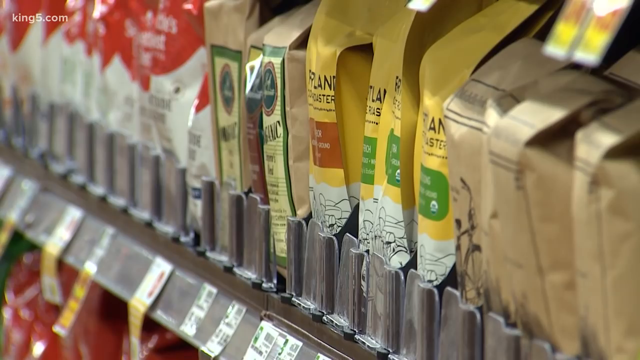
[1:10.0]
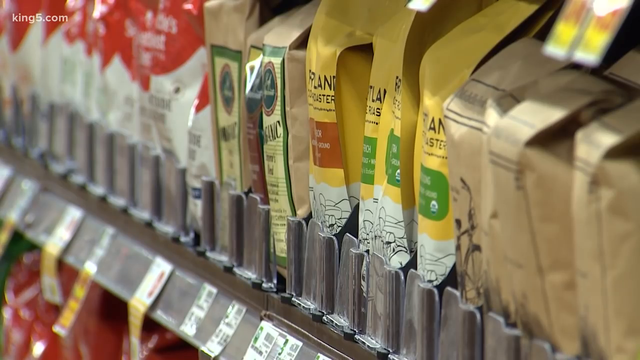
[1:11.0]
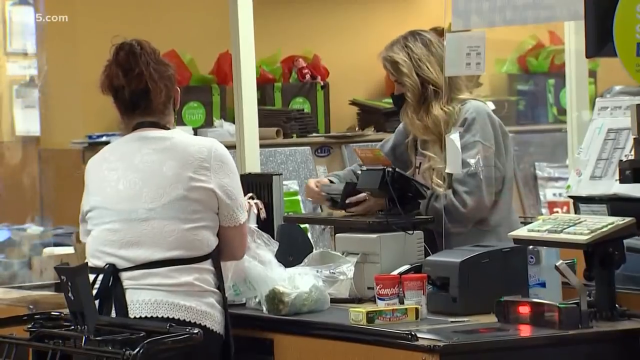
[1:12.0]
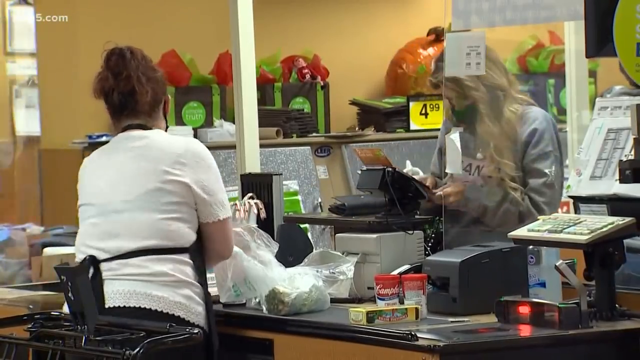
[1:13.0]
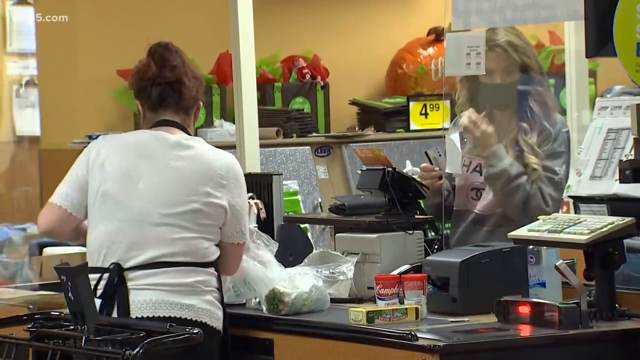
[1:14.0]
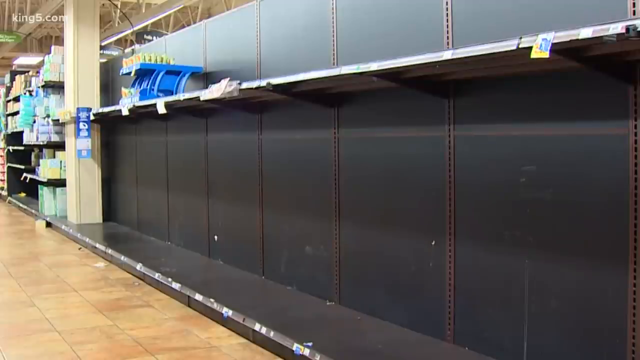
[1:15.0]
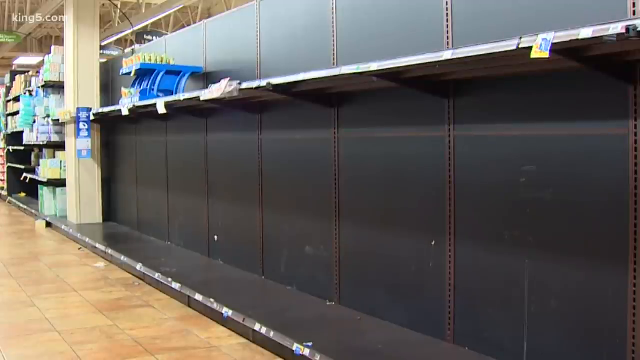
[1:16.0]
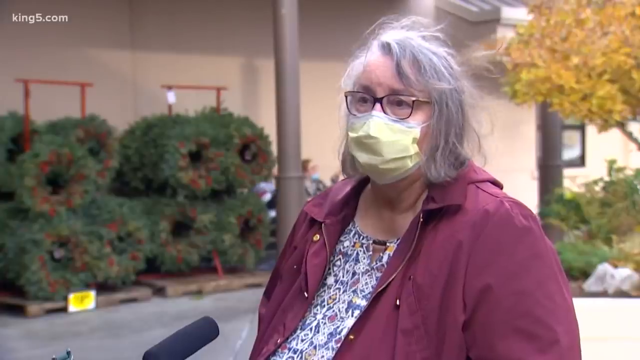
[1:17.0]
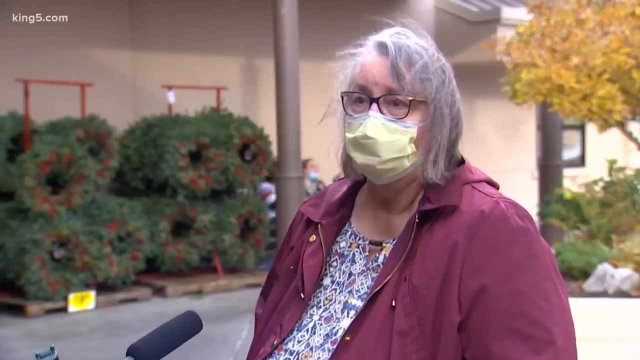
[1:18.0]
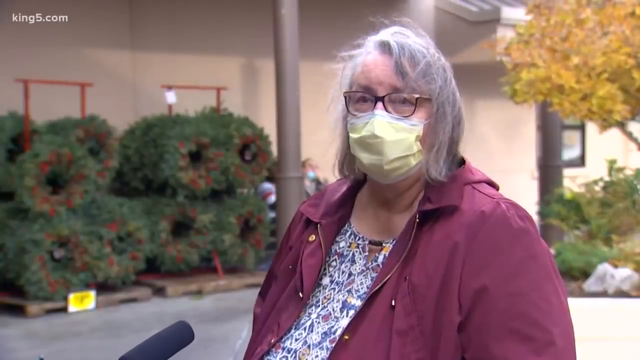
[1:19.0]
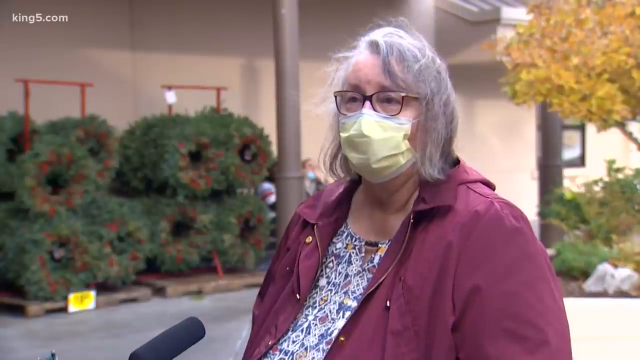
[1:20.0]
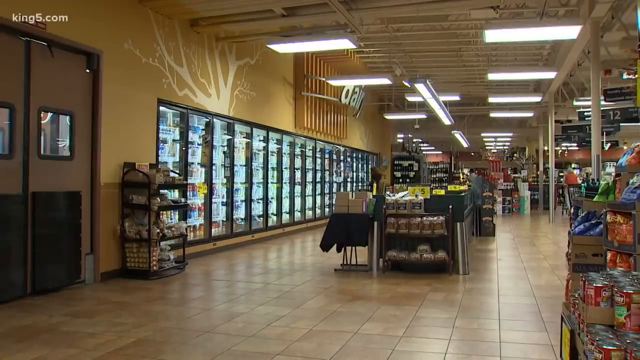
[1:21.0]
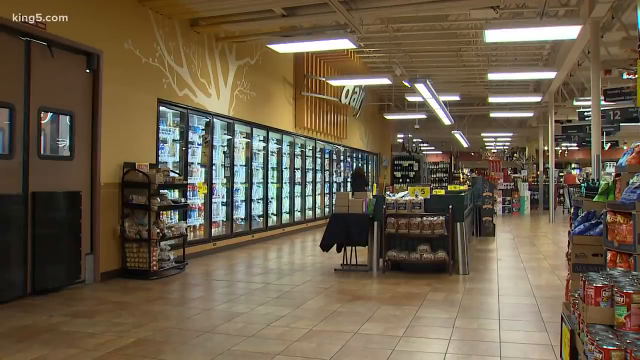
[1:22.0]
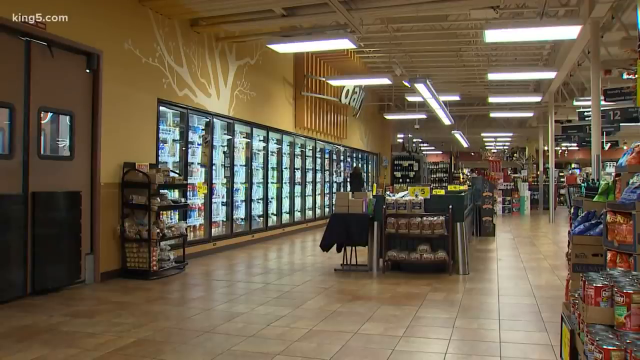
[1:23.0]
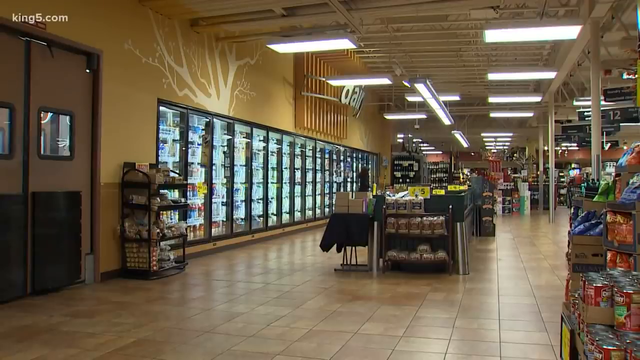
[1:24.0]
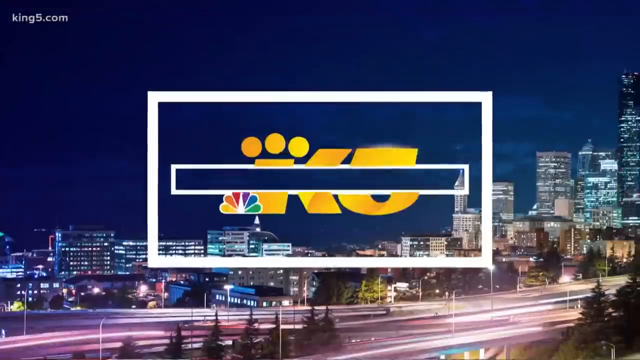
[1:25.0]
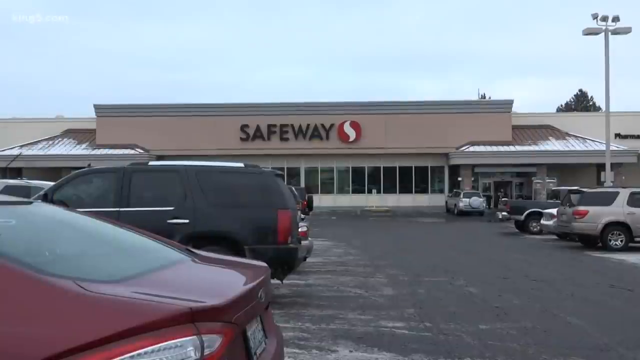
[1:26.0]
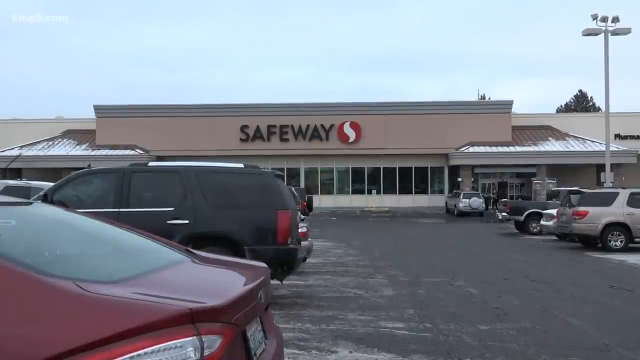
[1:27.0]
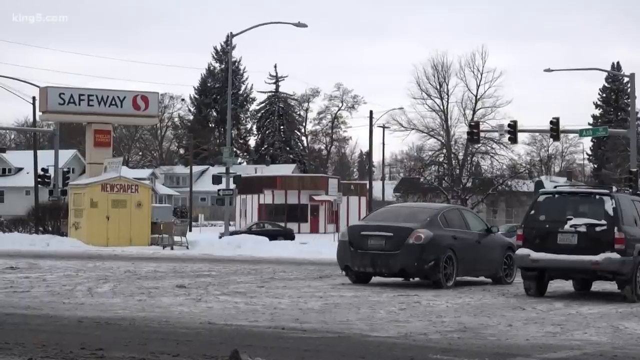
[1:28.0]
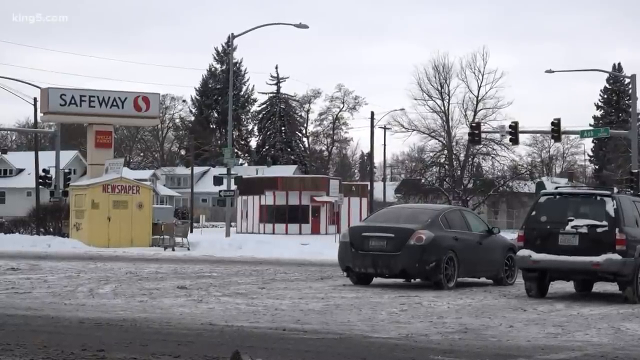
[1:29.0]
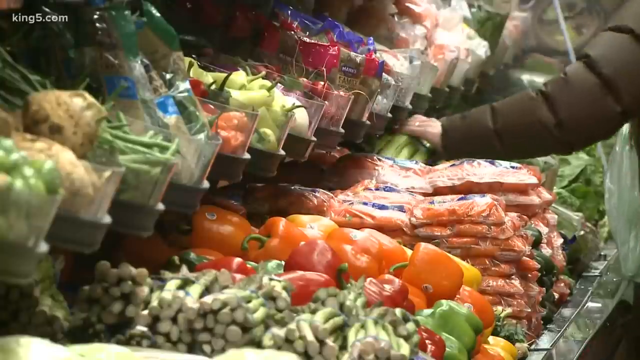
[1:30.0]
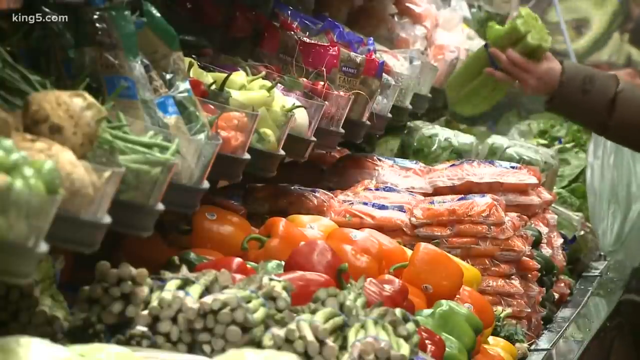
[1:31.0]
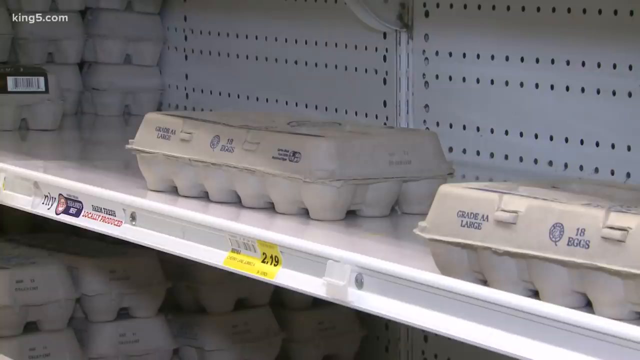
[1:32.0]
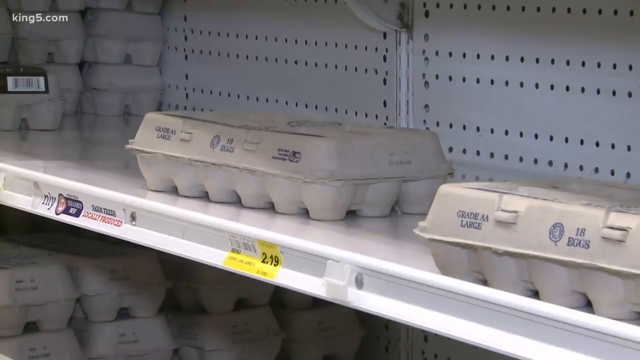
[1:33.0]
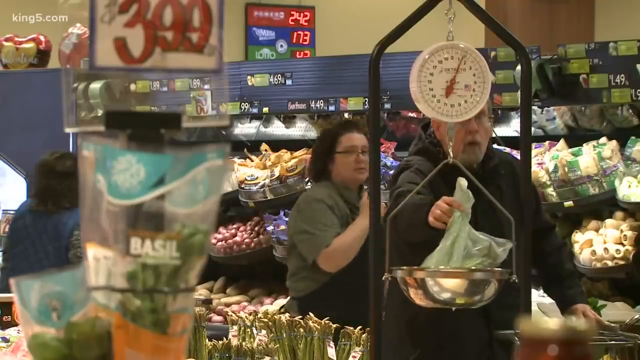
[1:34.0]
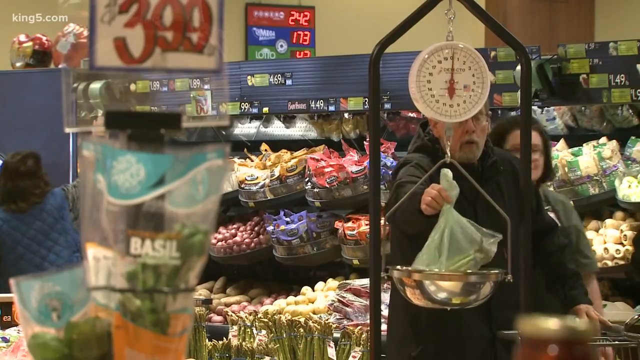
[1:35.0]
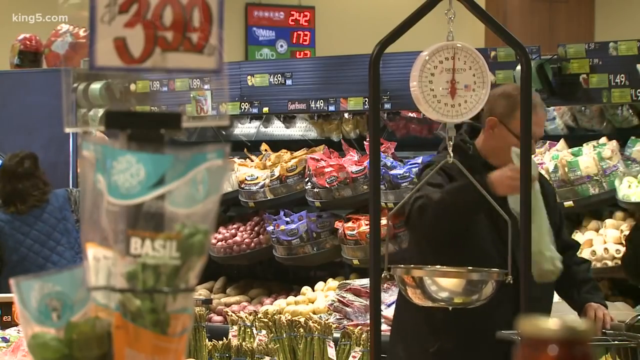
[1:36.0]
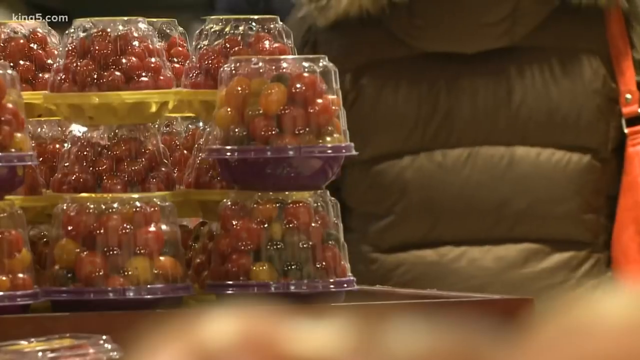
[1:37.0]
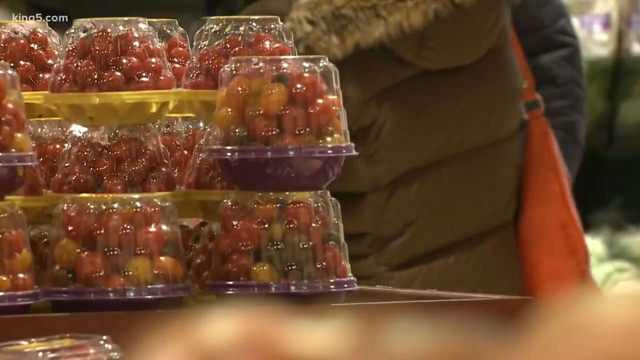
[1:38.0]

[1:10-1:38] The side-angle view of the products continues, then the scene switches to somebody bagging a customer's groceries at the cashier. The camera is behind the cashier, facing a blonde lady who is paying for the items with her card in her hand. Another angle in an aisle shows the products sold out and the shelves empty. The woman wearing the yellow mask is seen outside again, continuing to speak to the side of the camera as she is interviewed. Inside the store, it seems rather quiet: one customer is over by the fridge freezer section on the dairy side, with some other customers in the distance. The K5 logo appears on the screen and the video transitions to the outside of the store on a snowy day. Another angle looks towards the Safeway sign in the corner near the road, with lights, some cars driving by and a few cars in the parking lot. Inside the produce section, a customer grabs some vegetables and peppers. Another angle shows only a few eggs on the shelf, with most of them sold out. A man measures some food and the weight of his bagged food. Finally, there is a close-up of some tomatoes in see-through jars, with an out-of-focus woman with an orange purse behind.